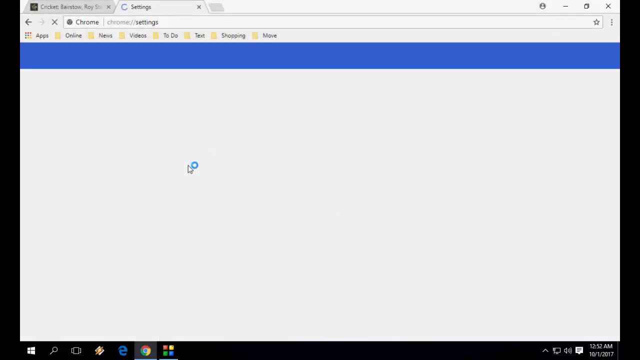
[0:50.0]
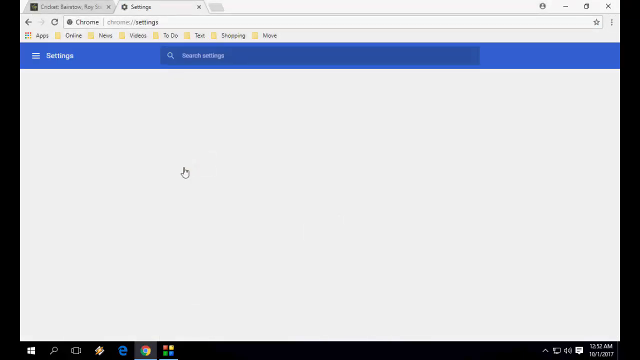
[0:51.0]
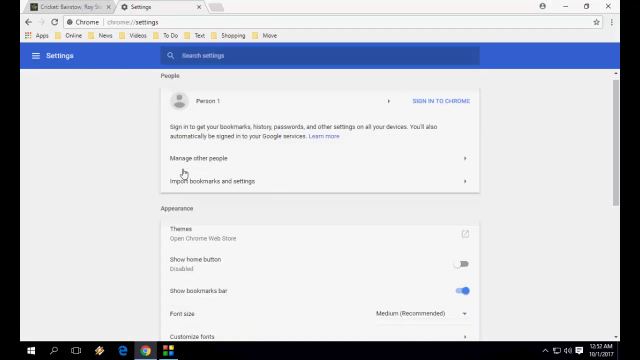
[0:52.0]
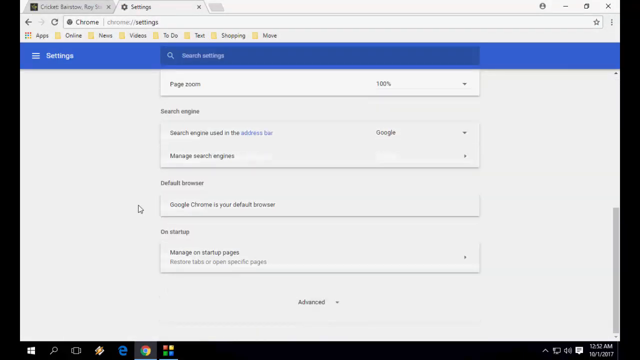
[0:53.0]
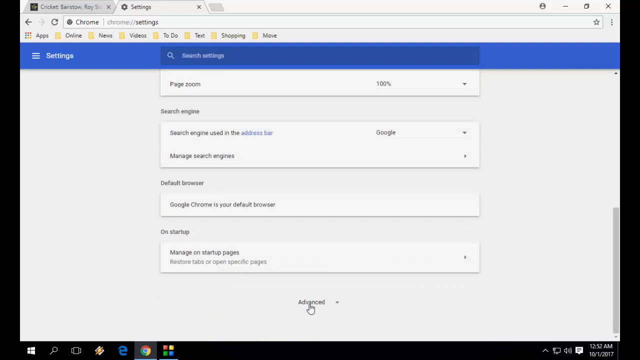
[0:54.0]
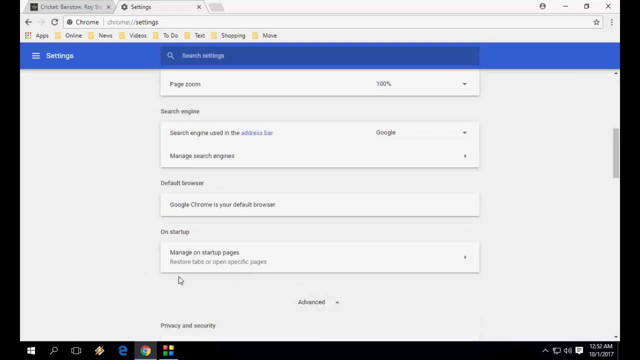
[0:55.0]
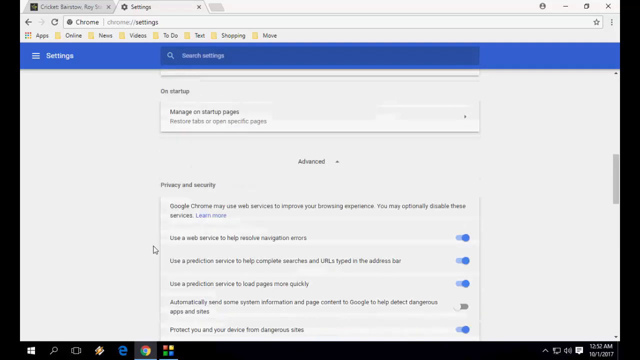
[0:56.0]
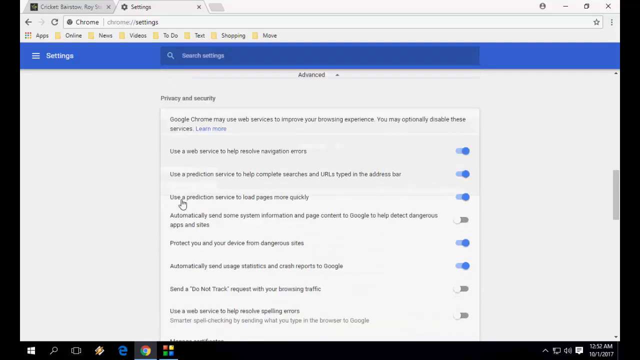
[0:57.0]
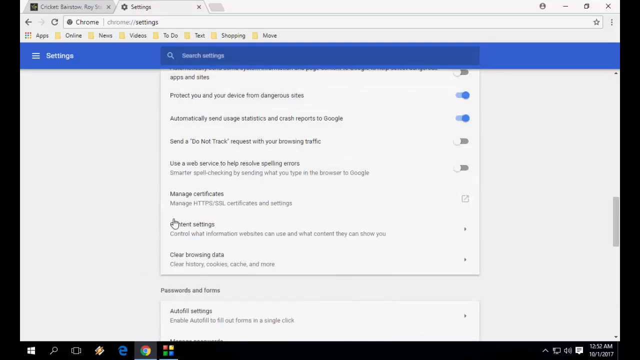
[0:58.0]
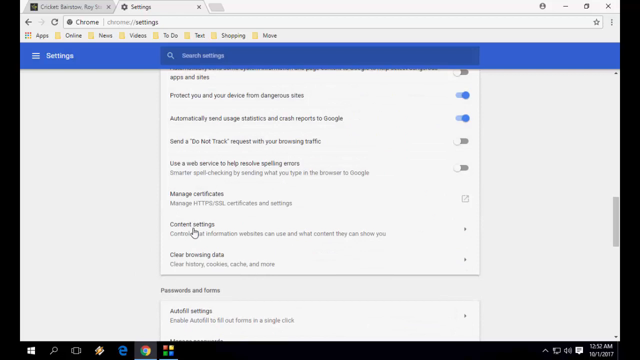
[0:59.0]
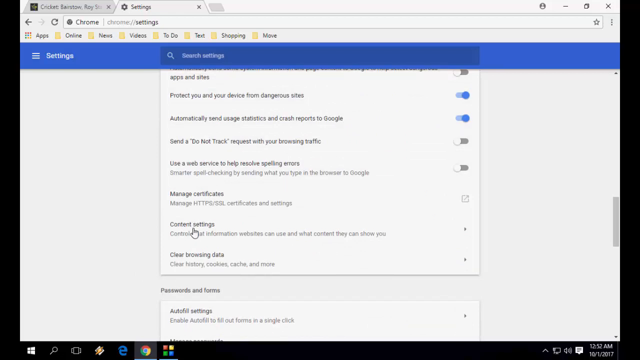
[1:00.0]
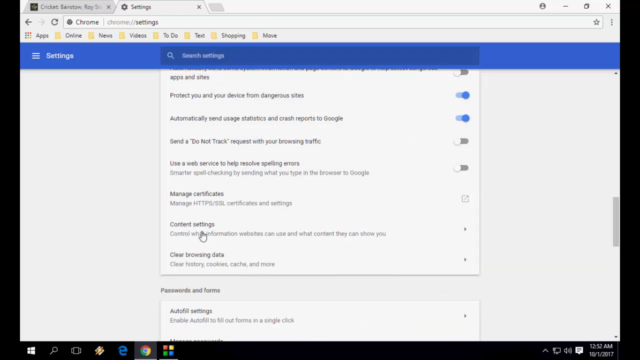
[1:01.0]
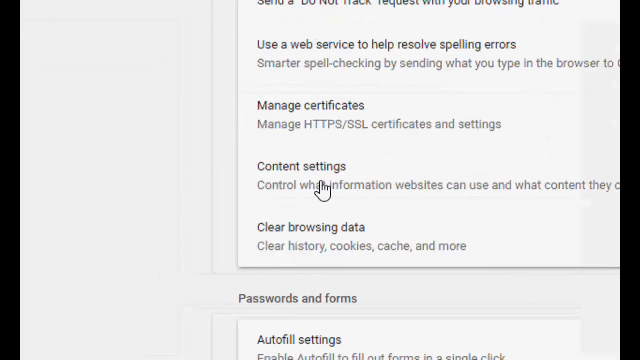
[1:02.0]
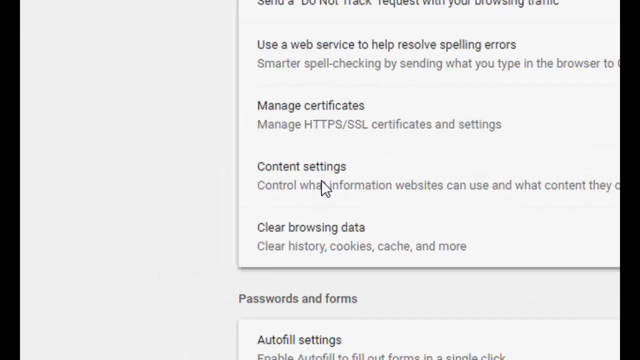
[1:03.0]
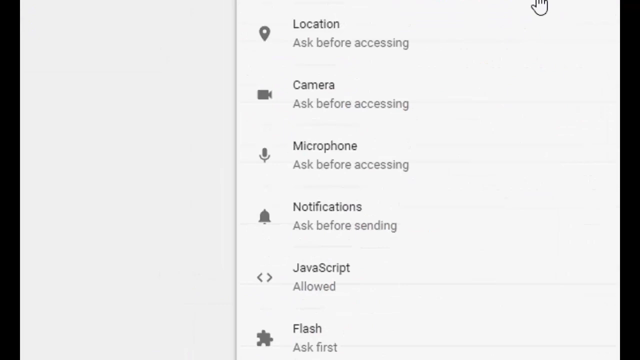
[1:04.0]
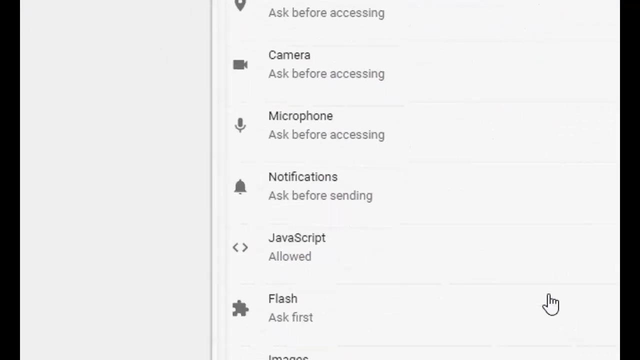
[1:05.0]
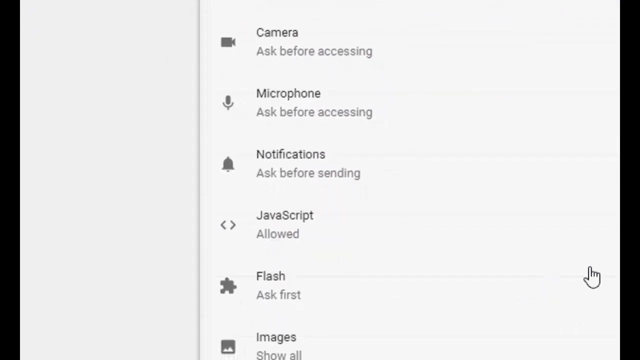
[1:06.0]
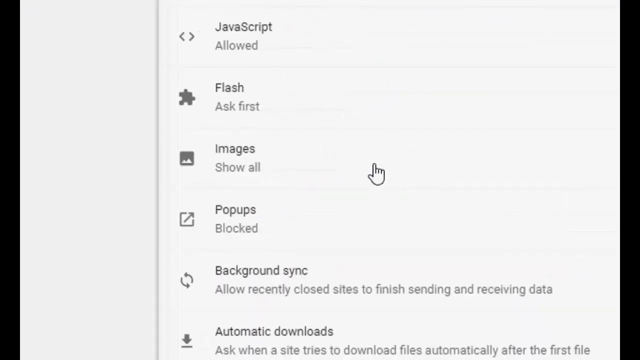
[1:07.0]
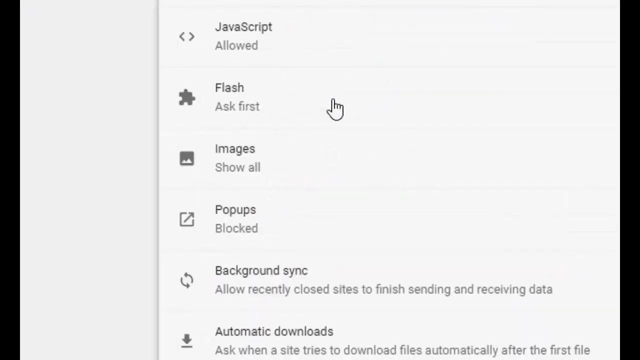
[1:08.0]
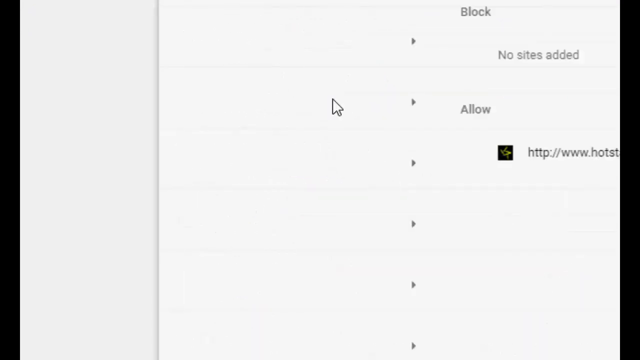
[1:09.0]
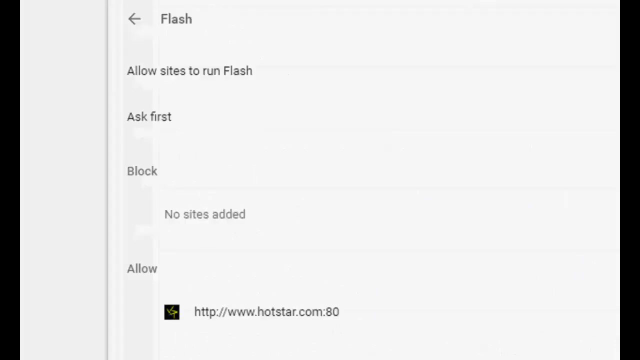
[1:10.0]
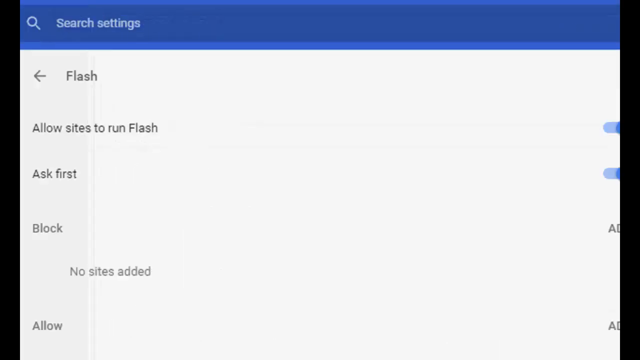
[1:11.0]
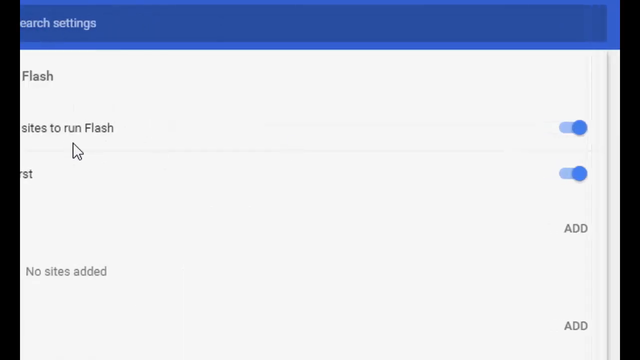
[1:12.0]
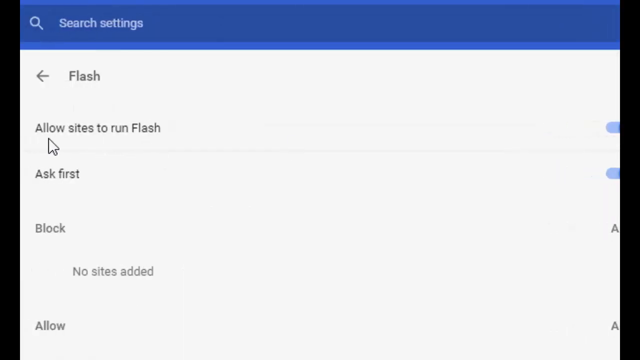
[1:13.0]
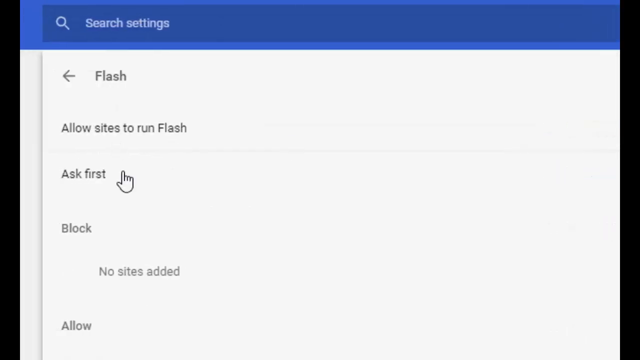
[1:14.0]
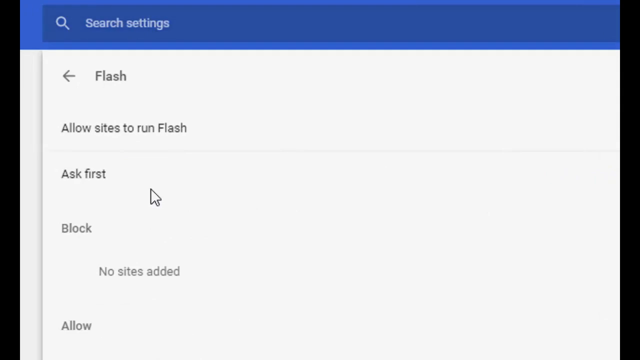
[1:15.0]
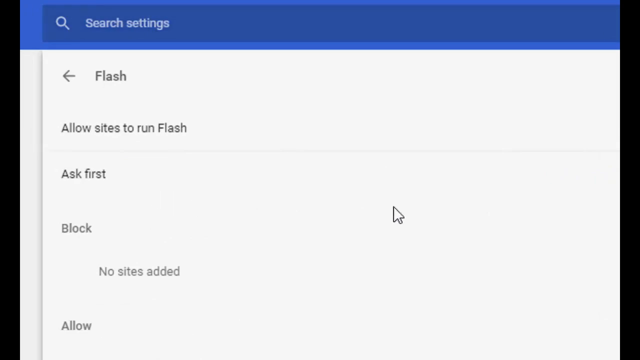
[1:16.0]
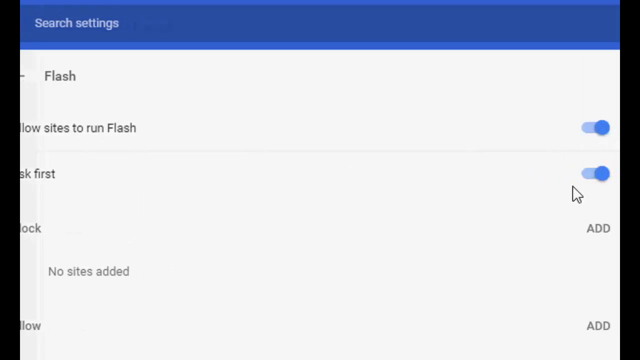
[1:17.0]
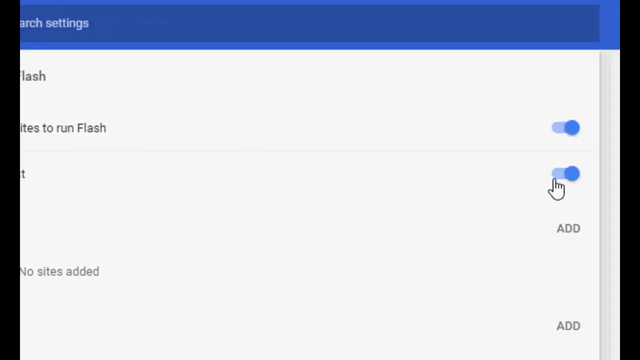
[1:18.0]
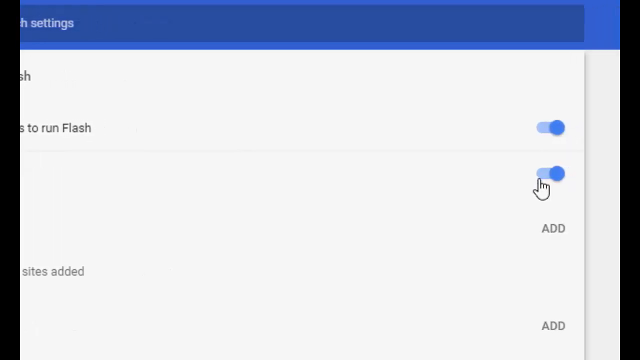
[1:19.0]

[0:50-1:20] In Settings, the view scrolls down past all the settings to the bottom and Advanced is selected. It then scrolls down again to where it is written "Content Settings", which is selected. Further down, past everything else, is the Flash section where it is written "Ask First"; "Ask First" is clicked and "Allow sites to run Flash" is looked at, and the setting is turned off so the video can play easily. The text is very clear.